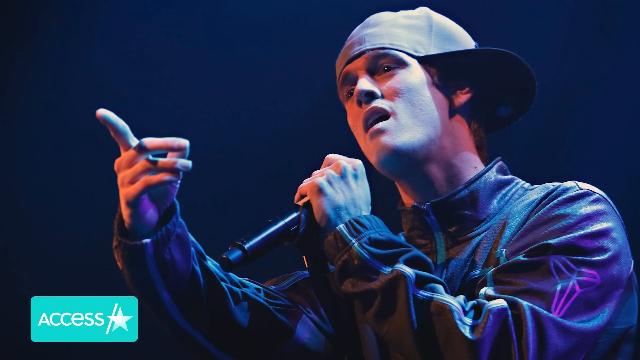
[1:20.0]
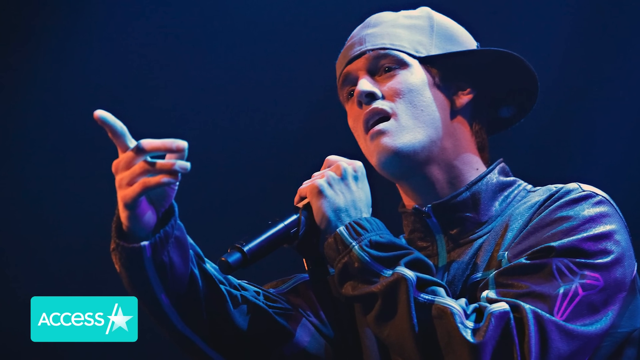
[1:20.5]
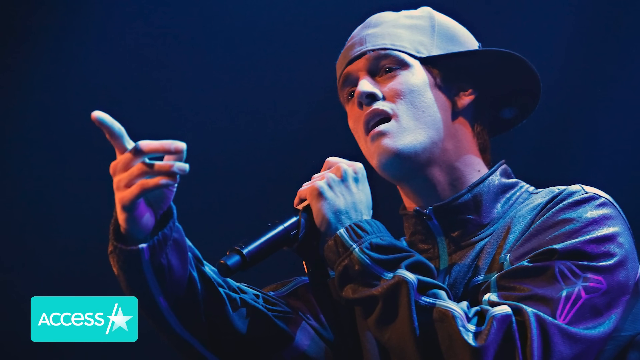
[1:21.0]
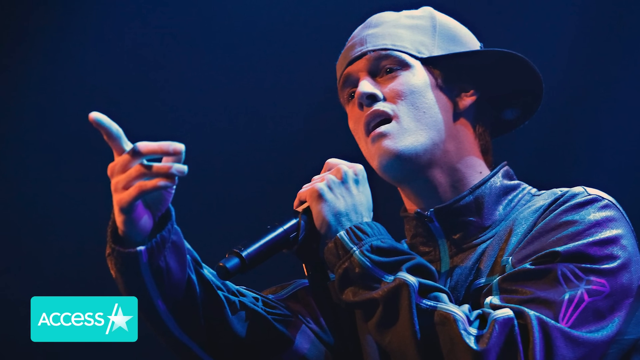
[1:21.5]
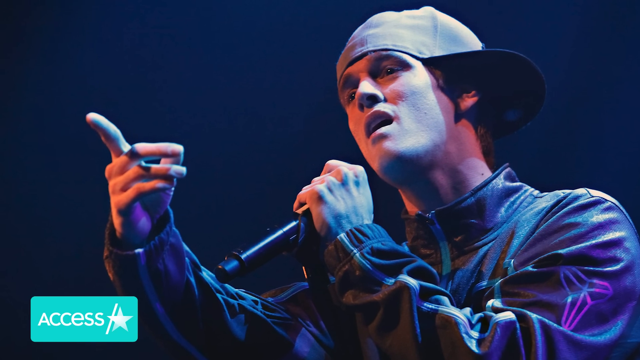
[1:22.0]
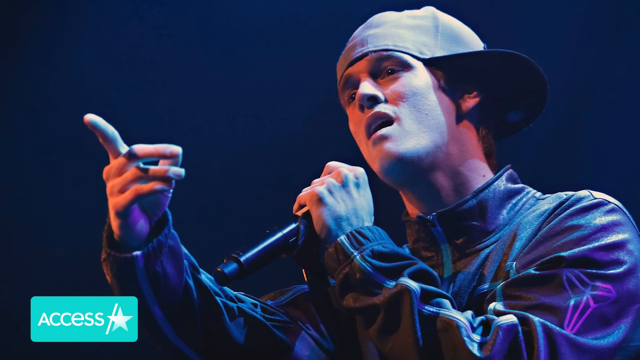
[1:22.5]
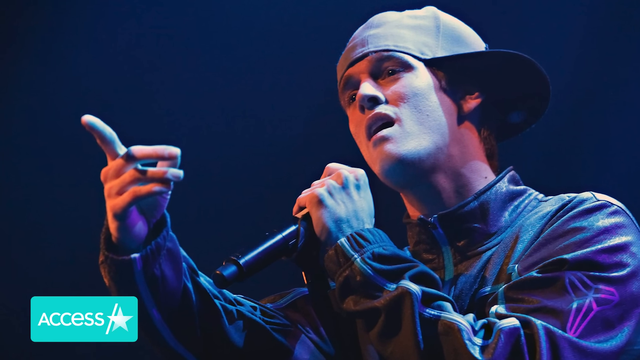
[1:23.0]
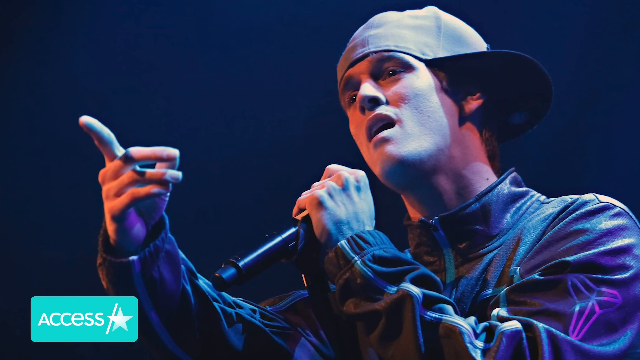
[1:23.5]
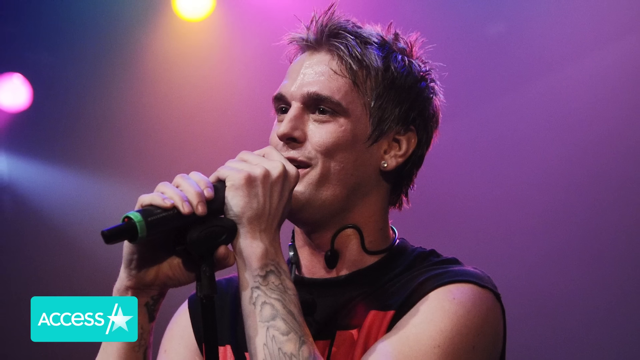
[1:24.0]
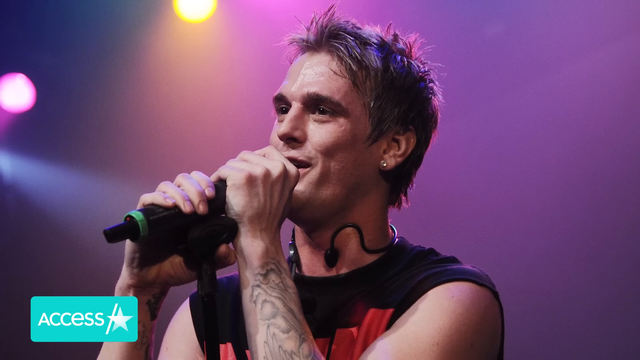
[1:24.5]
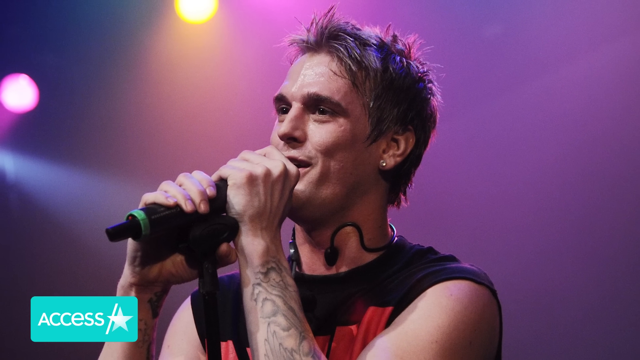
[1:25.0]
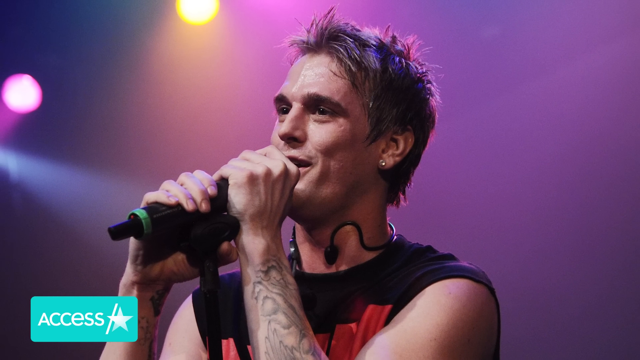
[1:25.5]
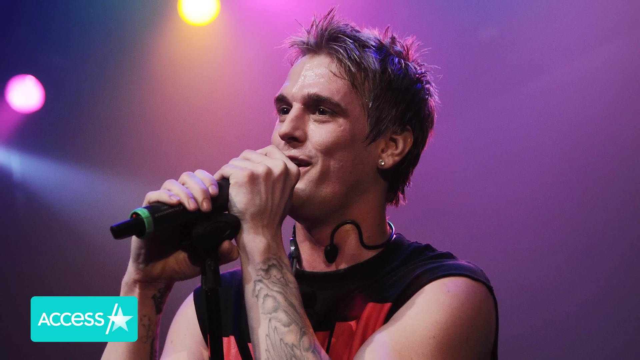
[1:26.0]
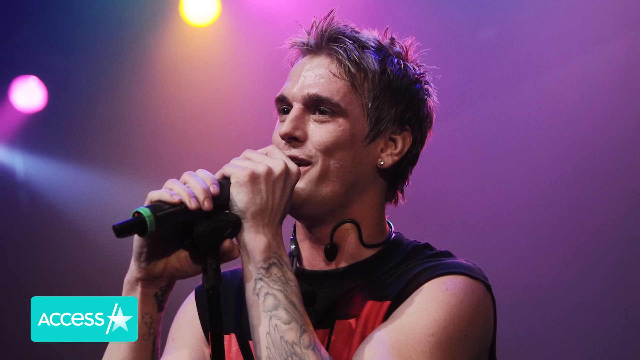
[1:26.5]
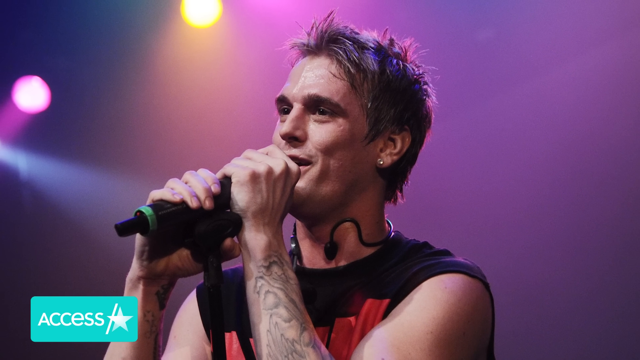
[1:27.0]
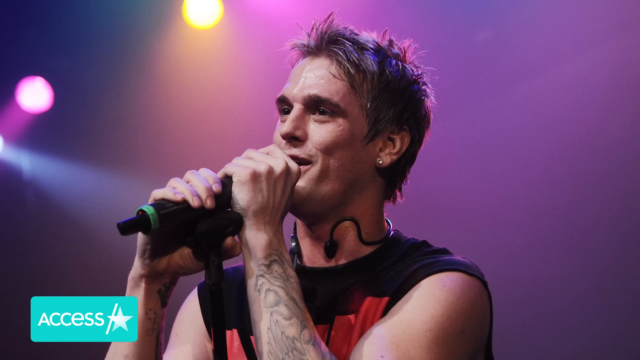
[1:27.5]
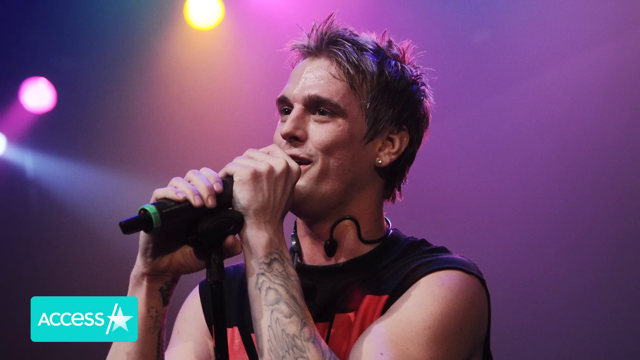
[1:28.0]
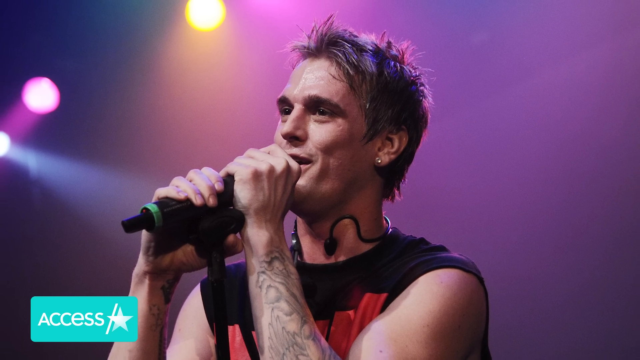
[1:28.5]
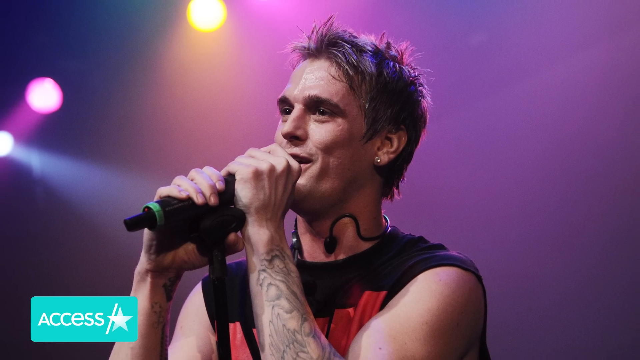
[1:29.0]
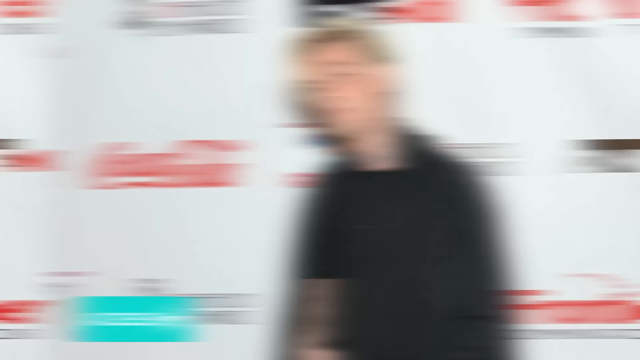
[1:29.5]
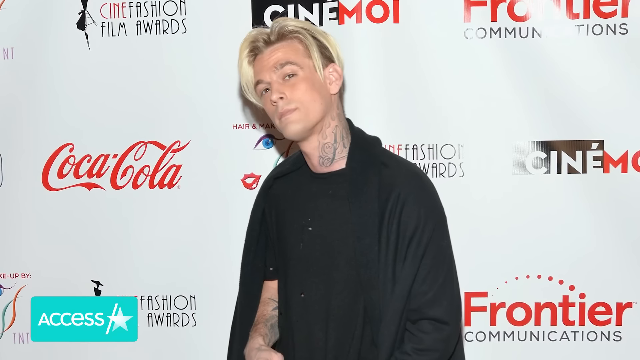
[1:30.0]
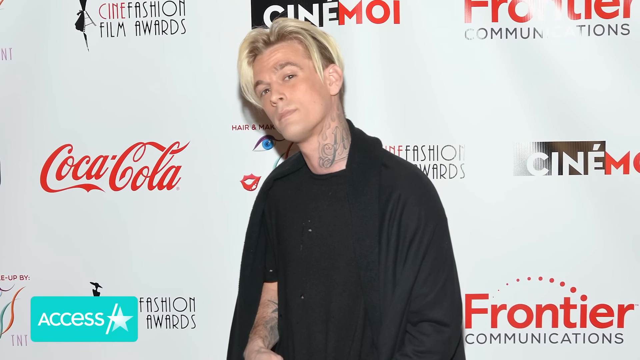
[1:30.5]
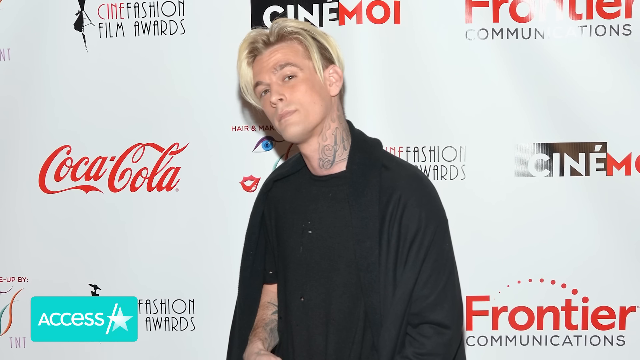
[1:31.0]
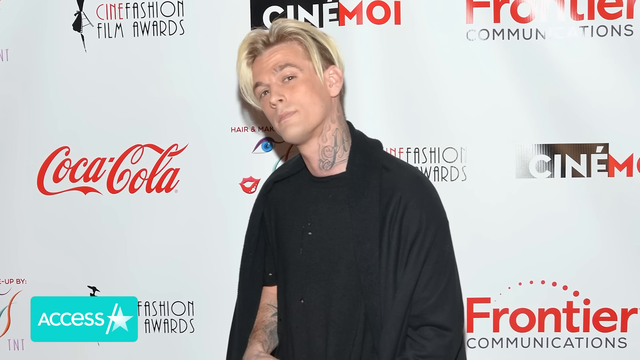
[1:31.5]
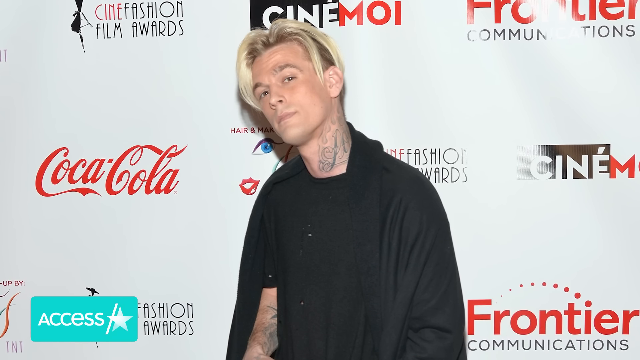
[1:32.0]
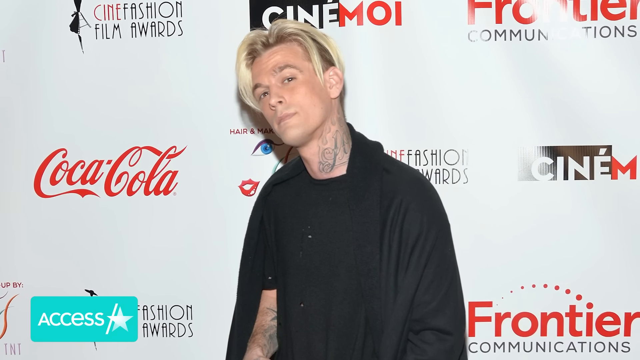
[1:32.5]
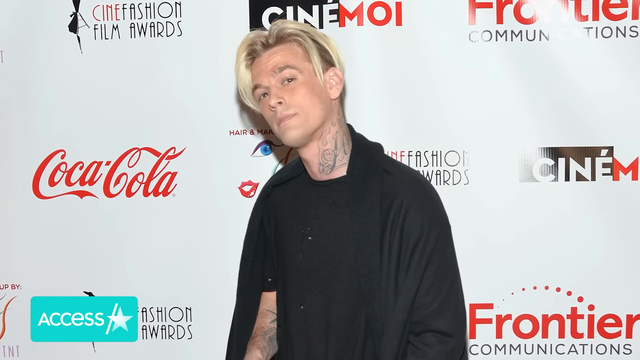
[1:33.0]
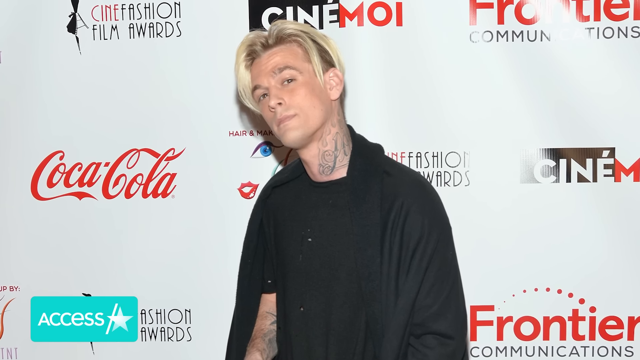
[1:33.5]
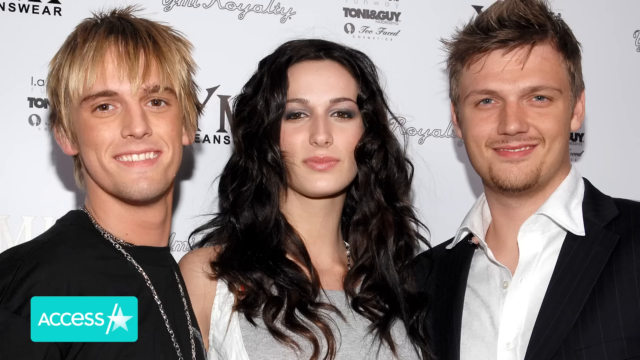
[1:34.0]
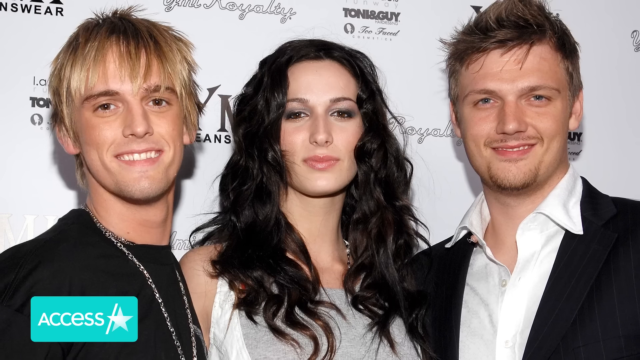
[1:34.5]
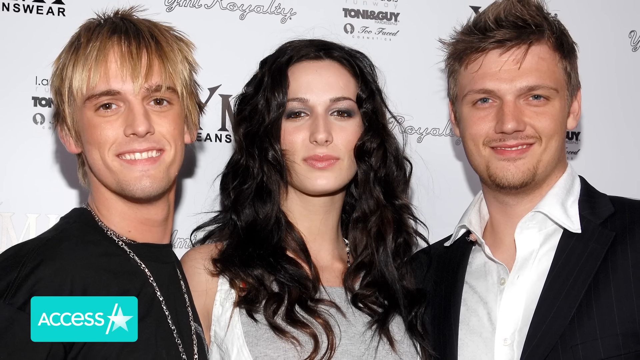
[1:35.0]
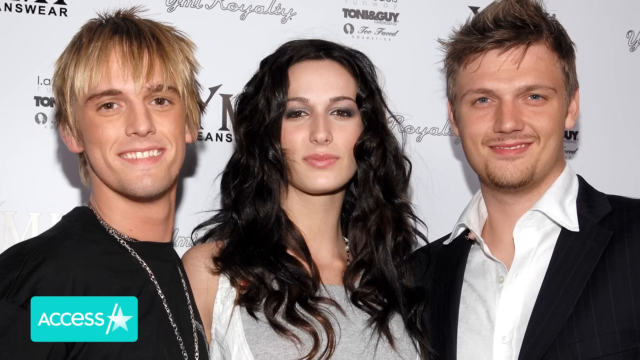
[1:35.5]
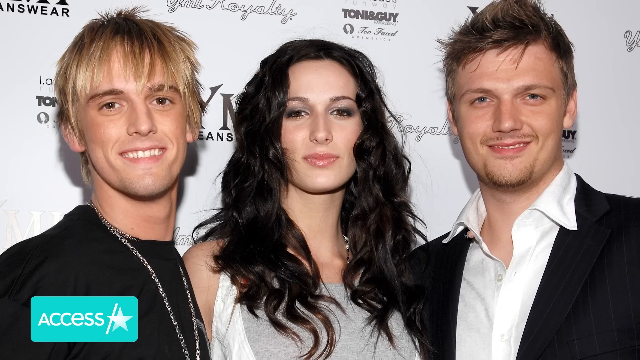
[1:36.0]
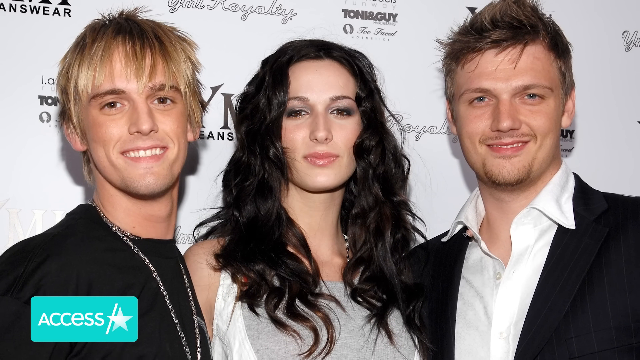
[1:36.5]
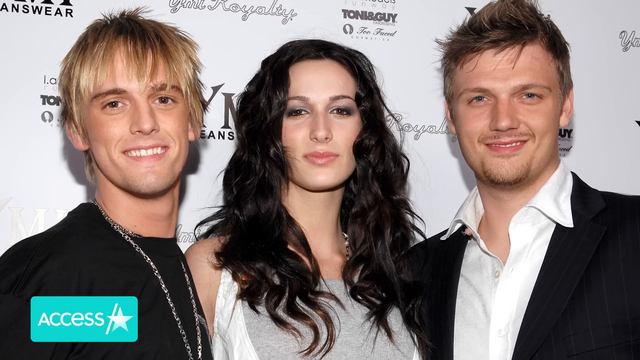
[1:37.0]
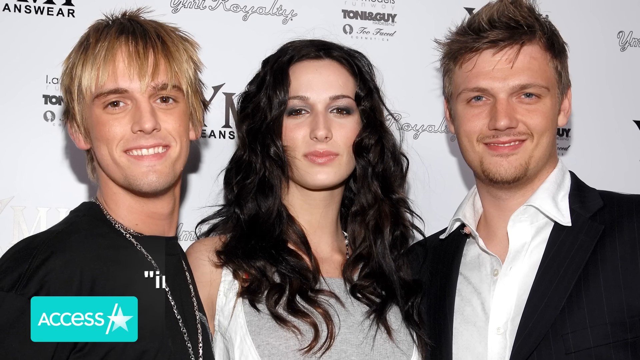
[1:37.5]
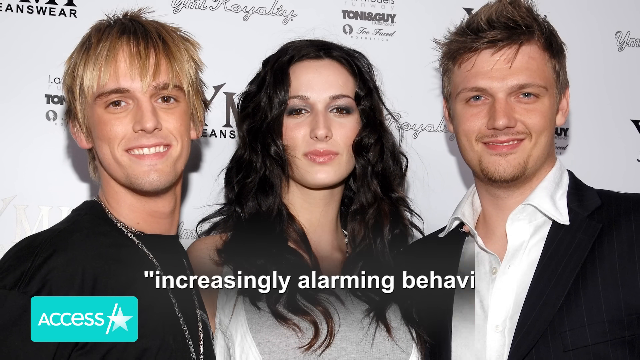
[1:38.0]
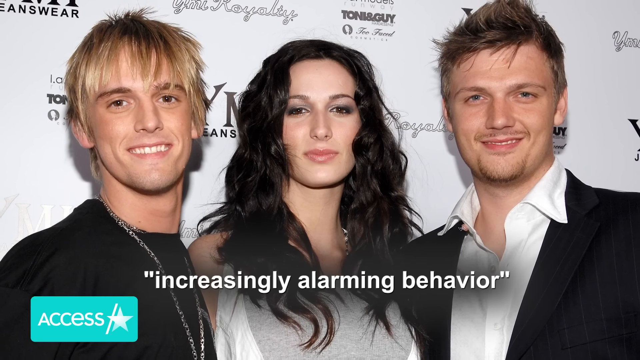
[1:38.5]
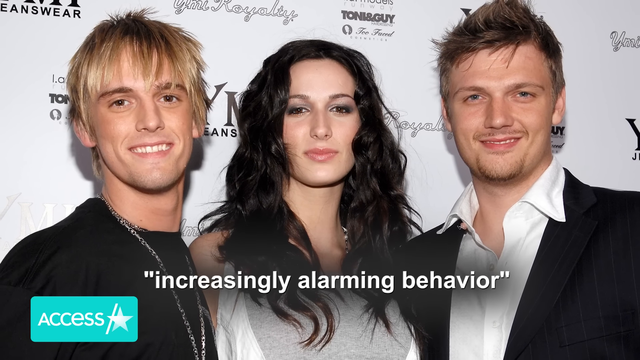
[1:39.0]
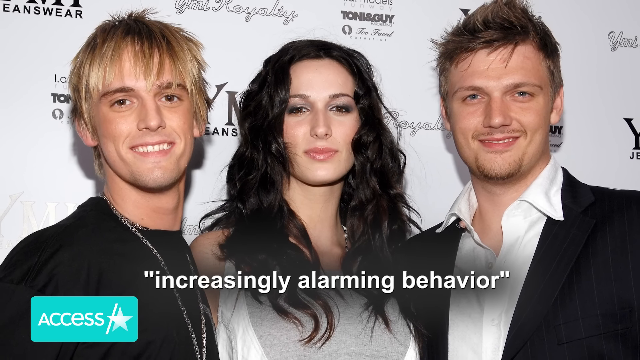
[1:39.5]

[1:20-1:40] An image shows Aaron Carter singing at a concert, holding a microphone in his left hand and pointing outward with his right hand. He wears a hat sideways and a dark colored jacket. The scene shifts to him singing at a different concert, holding a microphone with both hands very close to his mouth and looking forward into the distance; what looks like a wired microphone or headset is wrapped around the back of his neck. Next he is at some sort of event, wearing all black, with a large tattoo on the left side of his neck. Then he appears with two other people: Aaron Carter on the left, a woman in the center, and a man on the right, all smiling. A caption at the bottom reads "increasingly alarming behavior." They appear to be at some sort of event, with a white board of multiple different sponsors behind them.